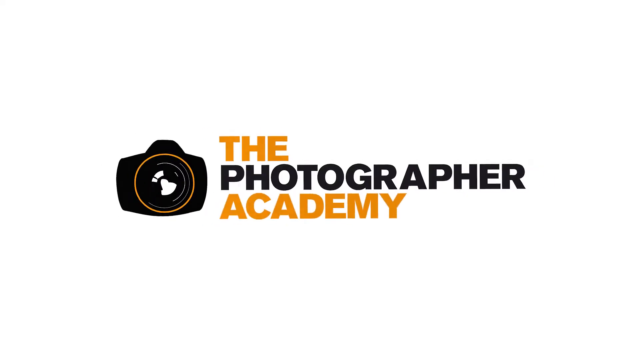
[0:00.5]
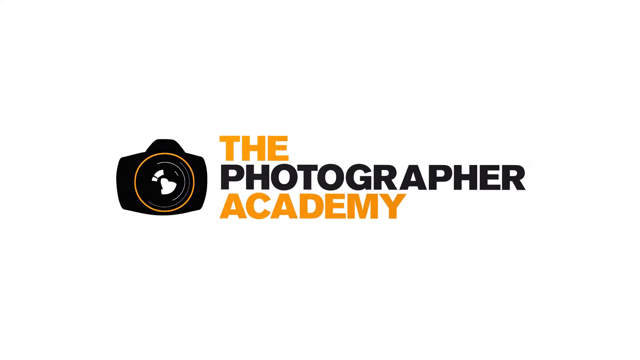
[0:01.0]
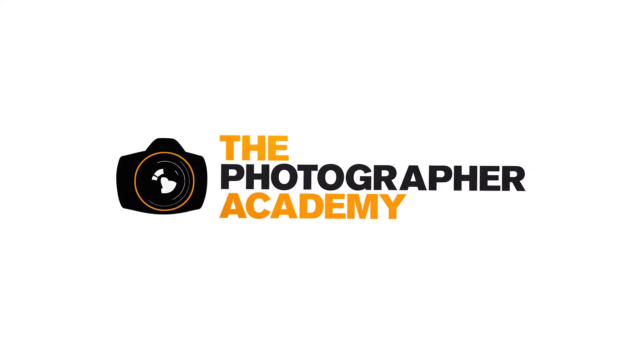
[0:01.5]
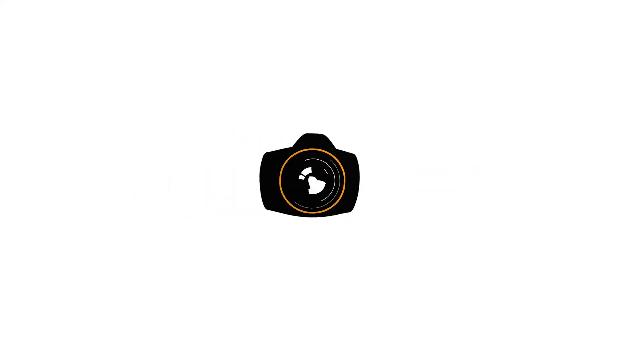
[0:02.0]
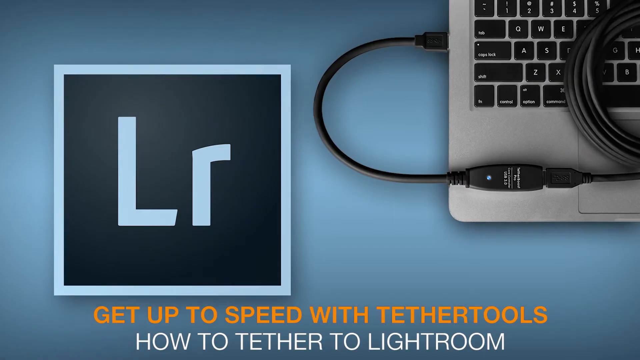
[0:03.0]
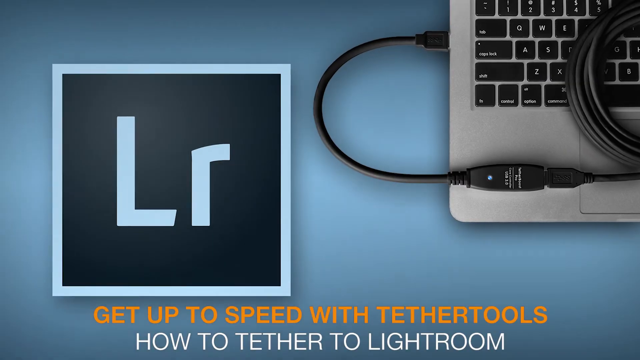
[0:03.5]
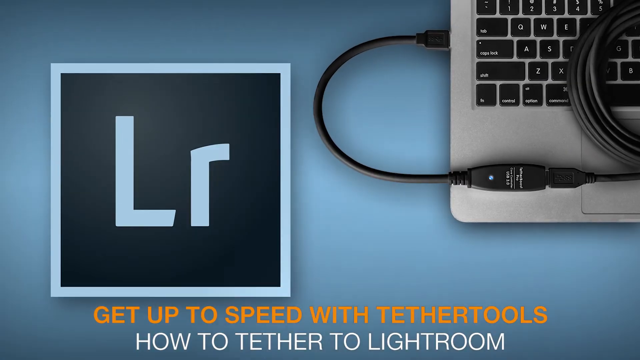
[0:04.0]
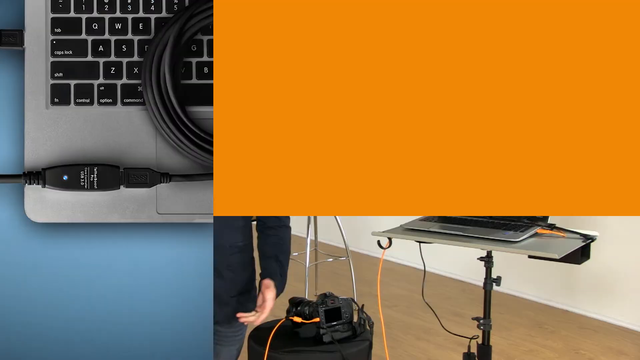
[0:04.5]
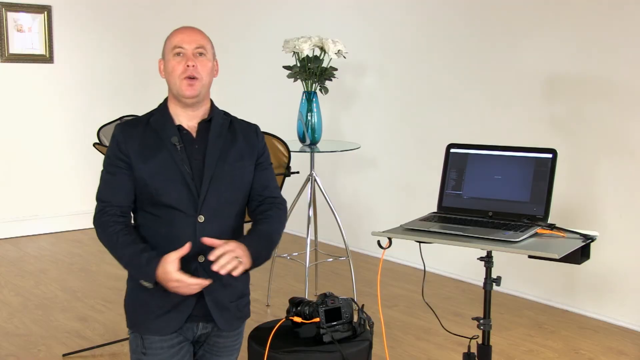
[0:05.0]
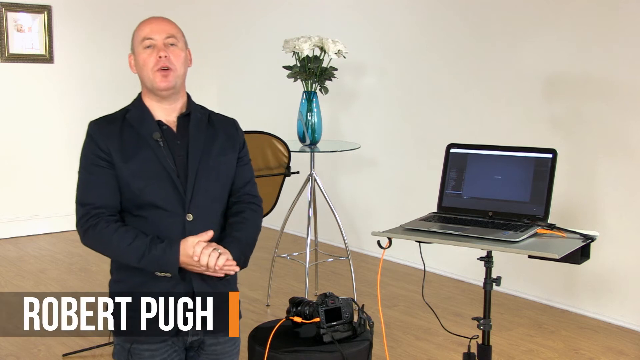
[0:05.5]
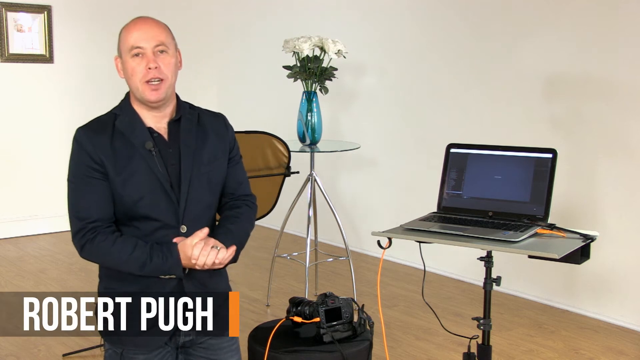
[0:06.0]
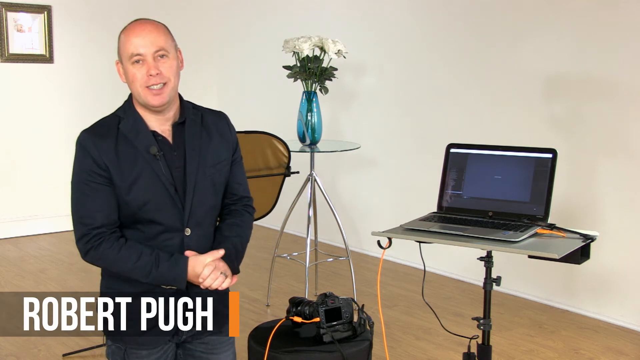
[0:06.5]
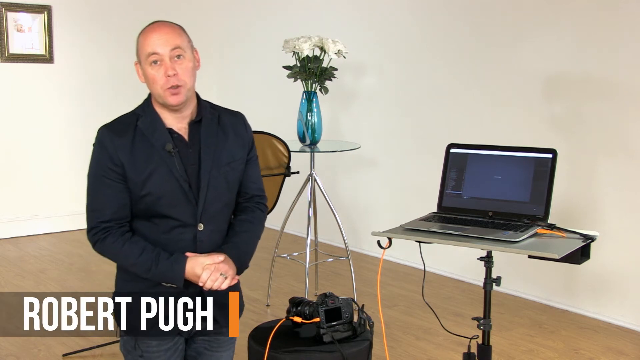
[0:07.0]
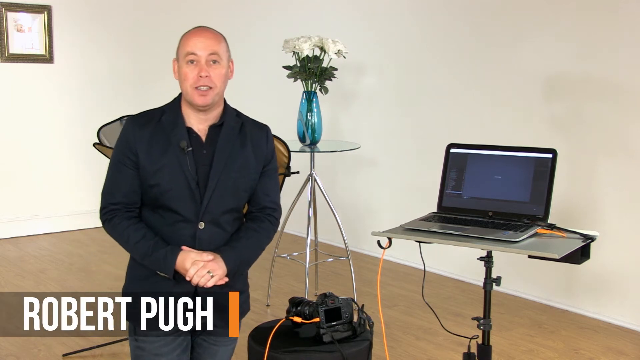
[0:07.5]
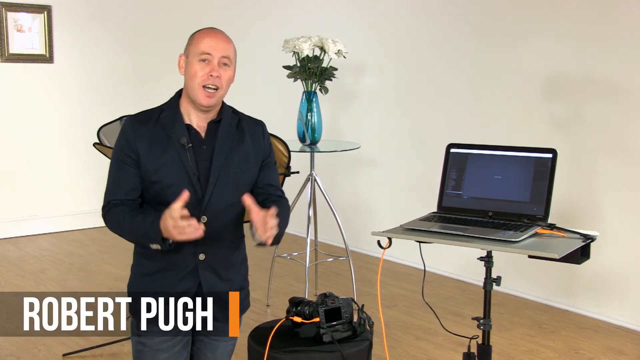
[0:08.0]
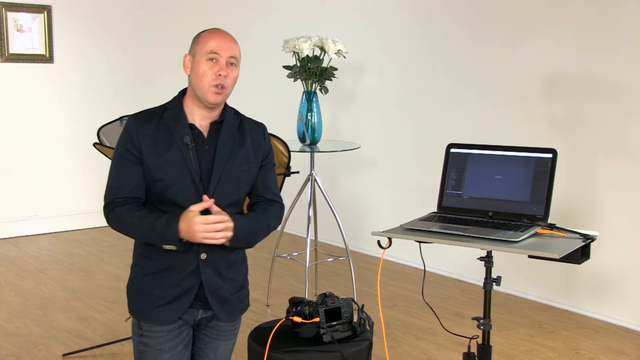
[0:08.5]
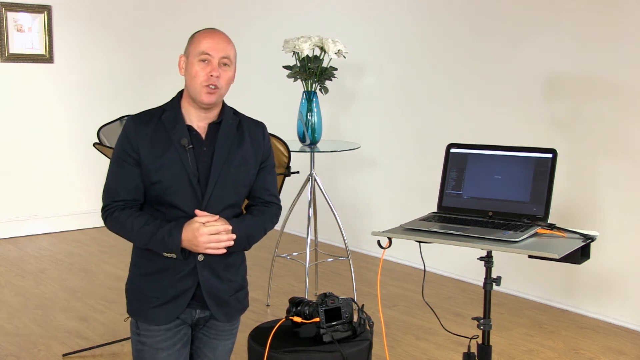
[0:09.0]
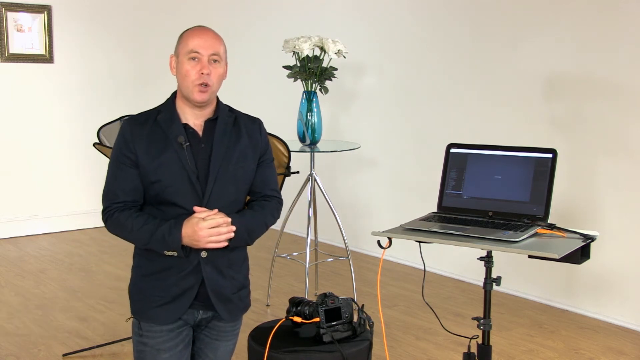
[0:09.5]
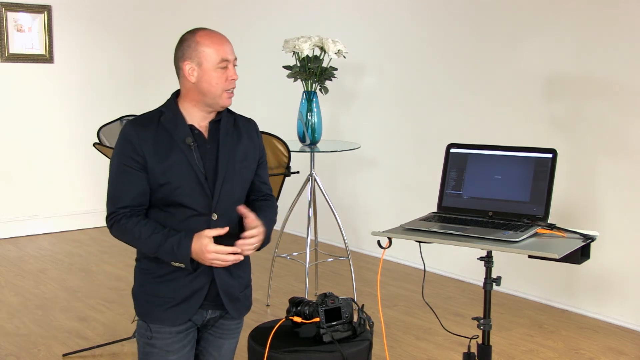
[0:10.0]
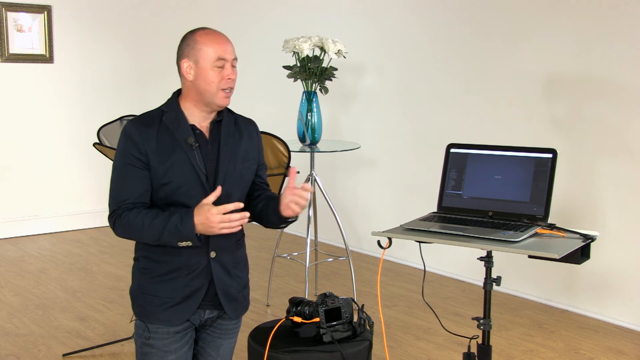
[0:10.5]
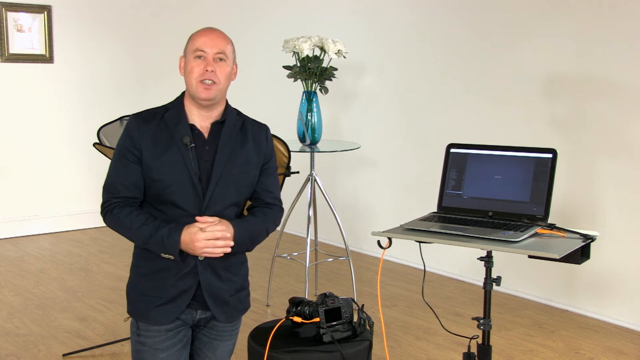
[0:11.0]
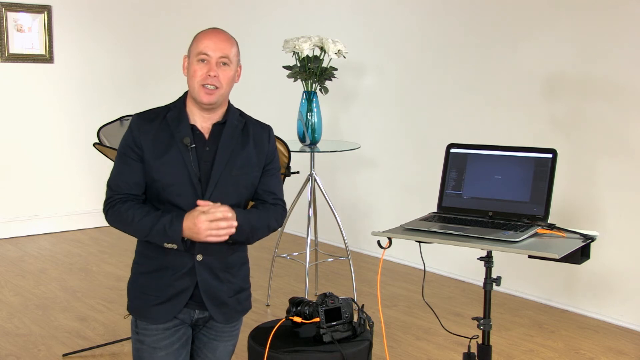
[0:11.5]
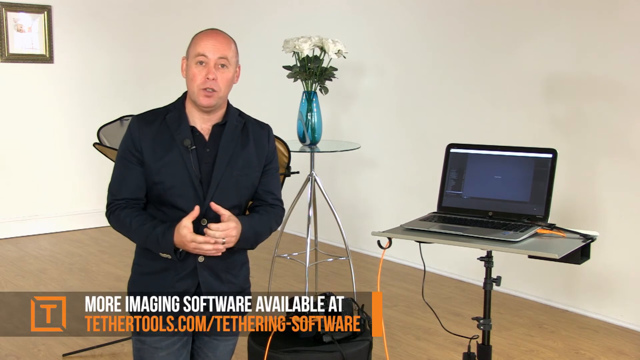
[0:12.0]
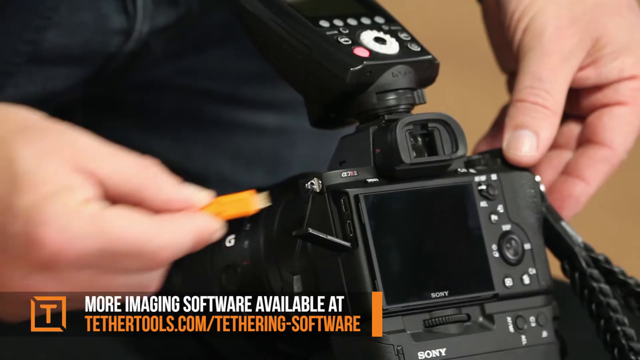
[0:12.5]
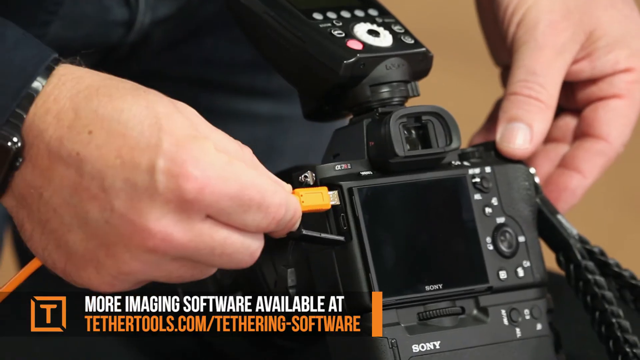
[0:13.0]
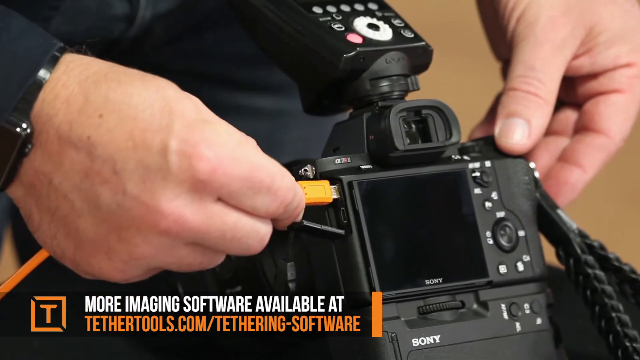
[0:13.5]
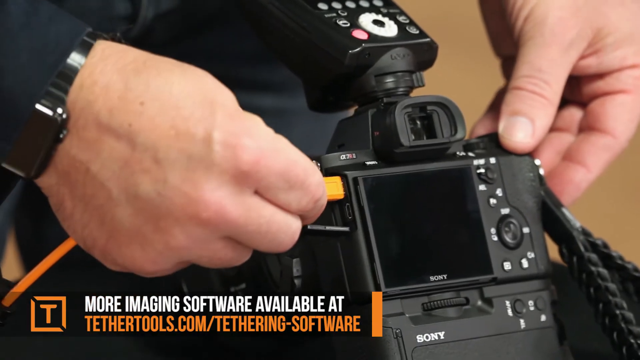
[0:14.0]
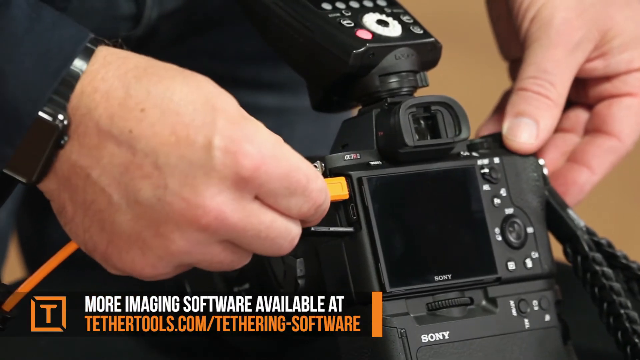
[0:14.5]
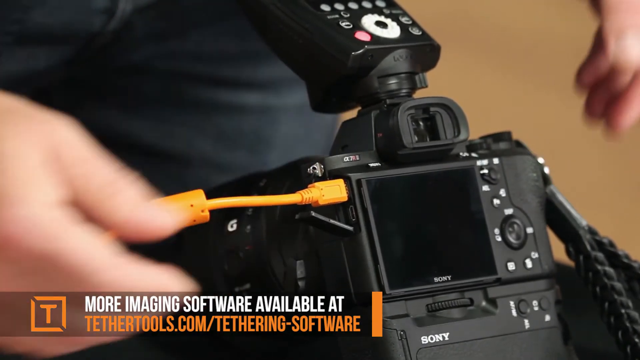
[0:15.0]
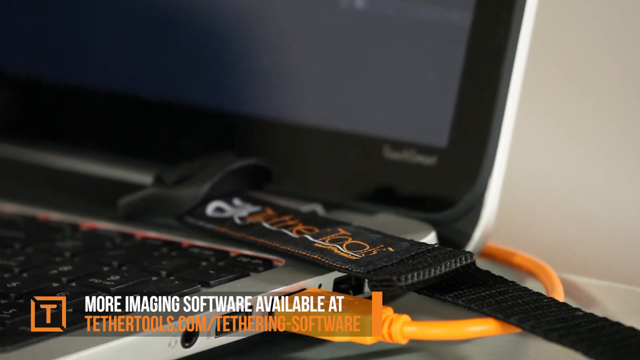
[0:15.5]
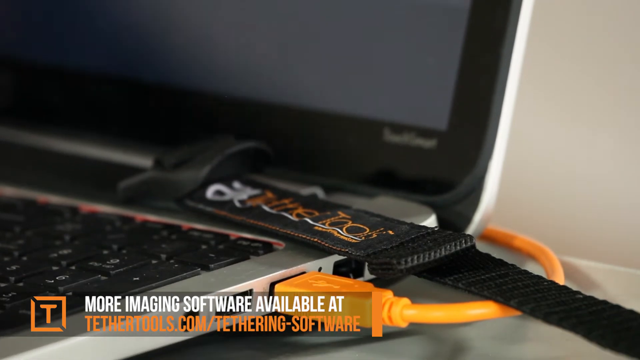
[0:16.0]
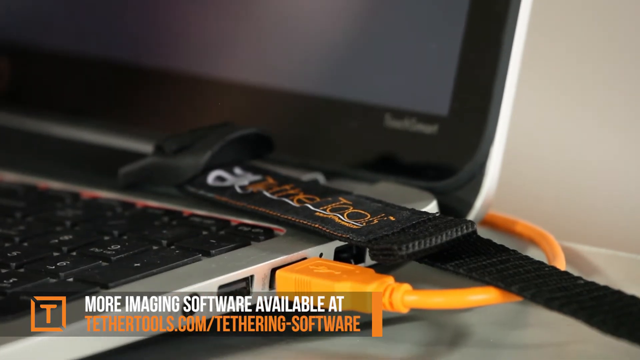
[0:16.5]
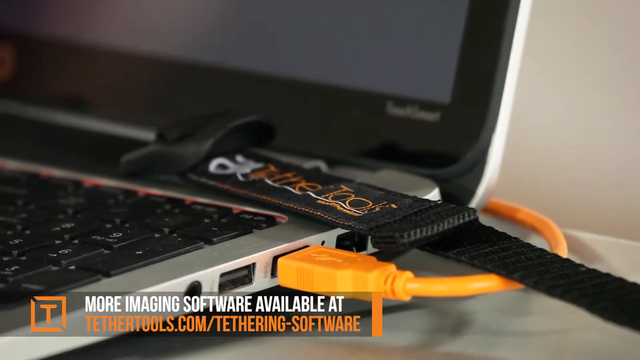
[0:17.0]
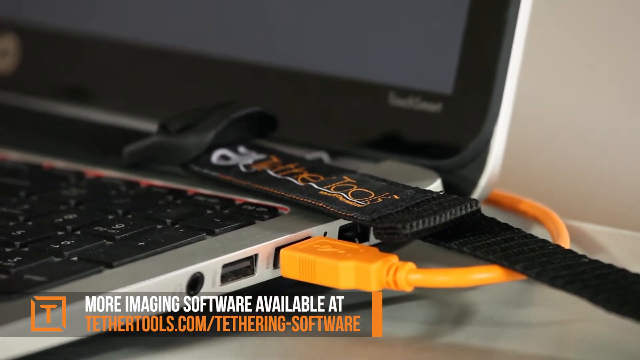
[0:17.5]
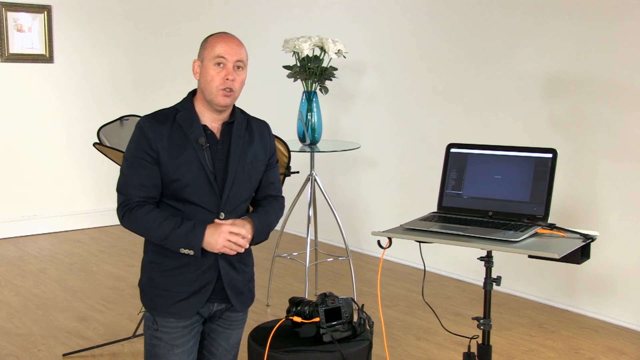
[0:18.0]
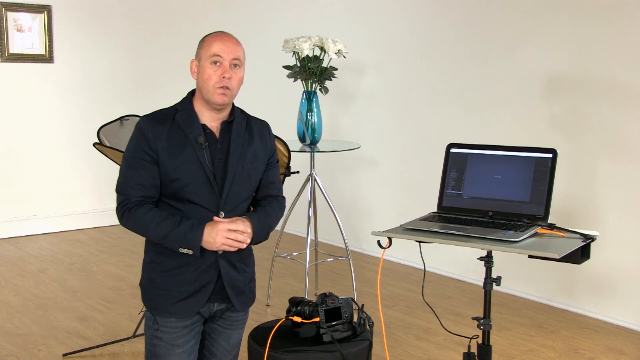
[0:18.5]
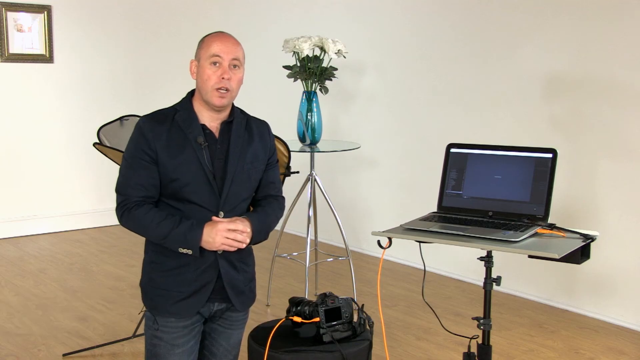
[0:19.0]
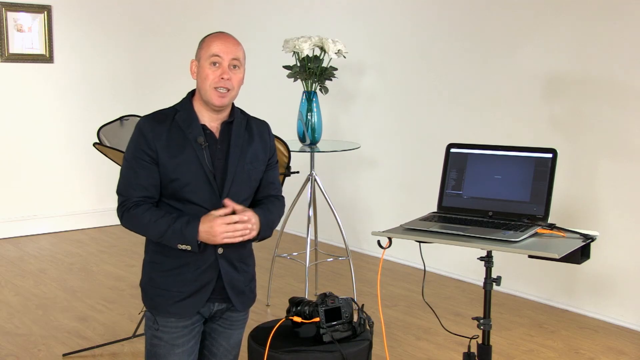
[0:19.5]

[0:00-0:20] The video opens on a white screen, and text grows from small in the center until it fills the middle section of the screen. It reads "the photographer academy", with "the" and "academy" in orange and "photographer" in black. To the left is a black camera with an orange circle around its lens. The camera then jumps in front of the text so only the camera is on screen, before a large orange star appears over the screen and turns it completely orange. A blue screen follows: on the left is a light blue box with a dark blue center containing pale blue text reading "lr", and the corner of a Mac keyboard shows in the top right corner with a cable coming out of it. At the bottom, orange text reads "get up to speed with tether tools", followed by white text reading "how to tether to light room". This slides off the screen, and the scene moves to a studio room that looks like a green screen, with a white wall holding one frame. At the back is a tall table with a blue vase holding white flowers, and there is a small desk with the laptop on it. A man on the left is talking, and his name, Robert Pugh, appears in the bottom left of the screen. A close-up shot then shows him putting a cable into a camera, with text at the bottom reading "more imaging software available at tethertools.com".